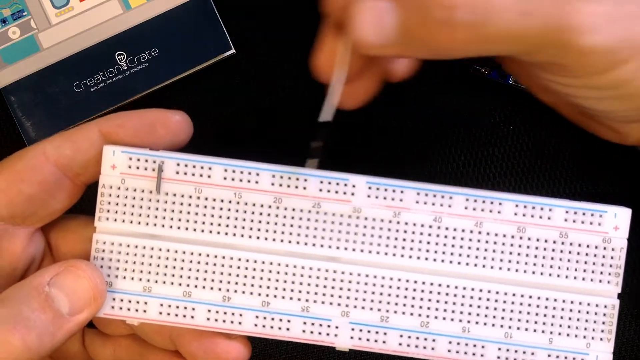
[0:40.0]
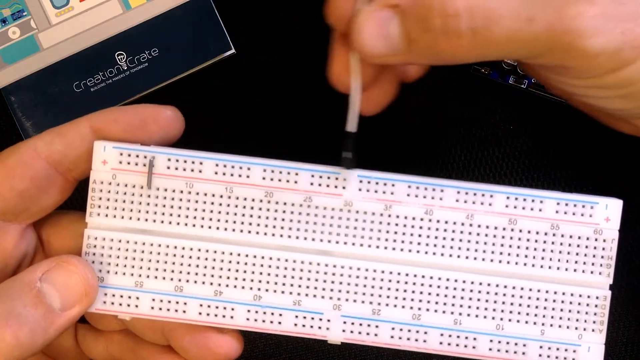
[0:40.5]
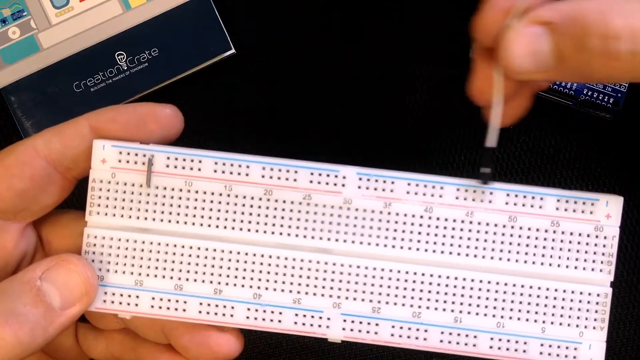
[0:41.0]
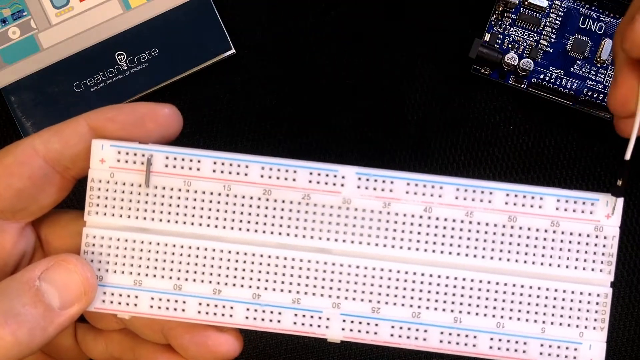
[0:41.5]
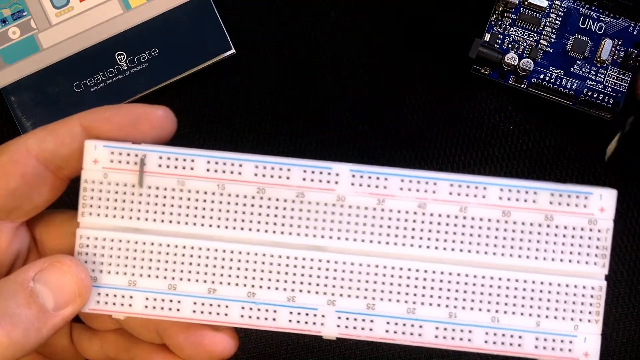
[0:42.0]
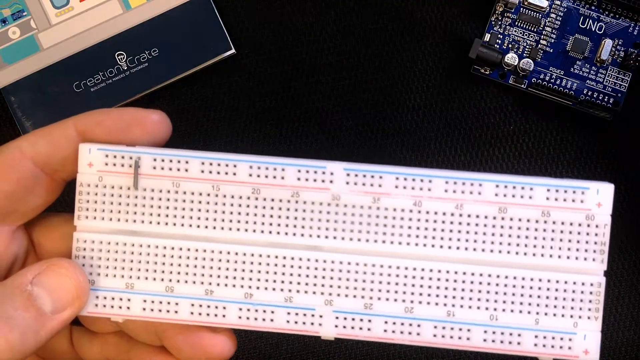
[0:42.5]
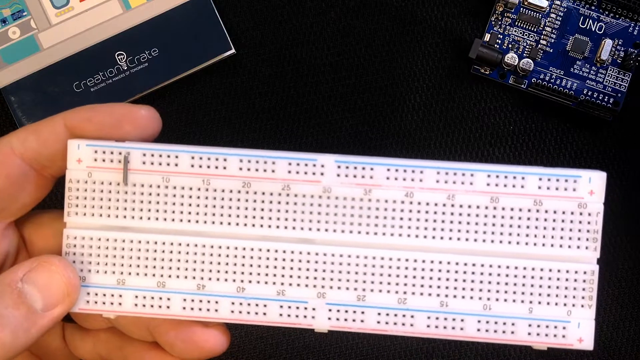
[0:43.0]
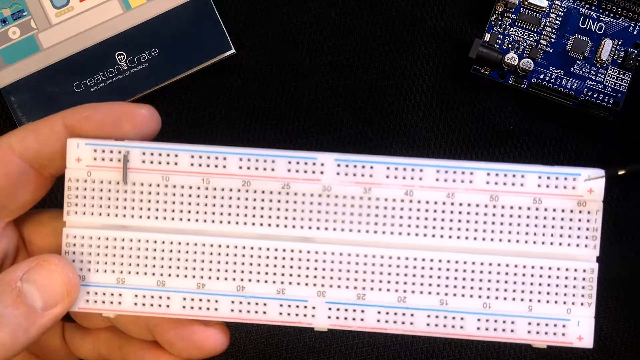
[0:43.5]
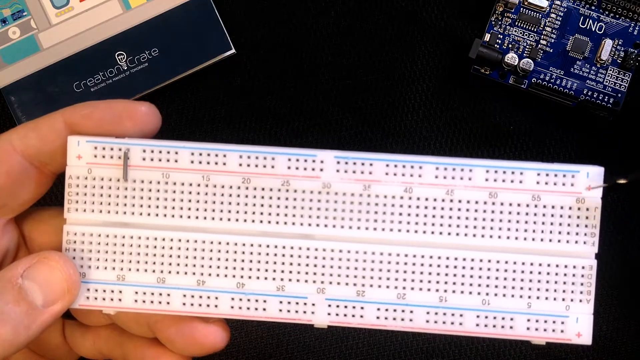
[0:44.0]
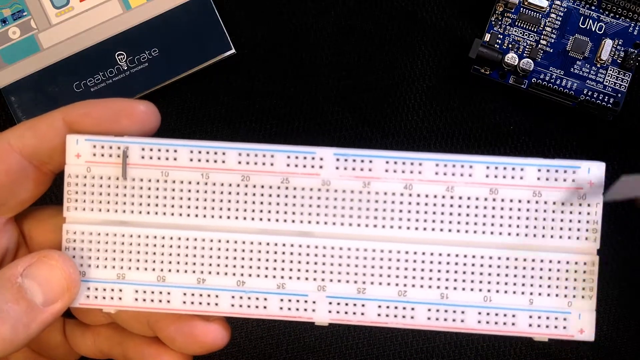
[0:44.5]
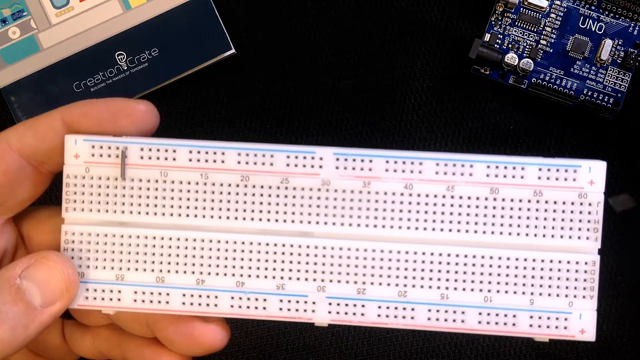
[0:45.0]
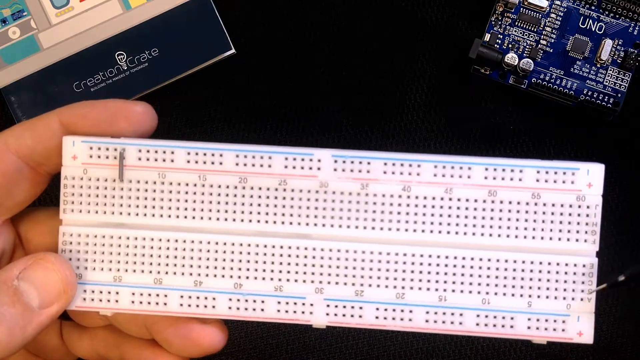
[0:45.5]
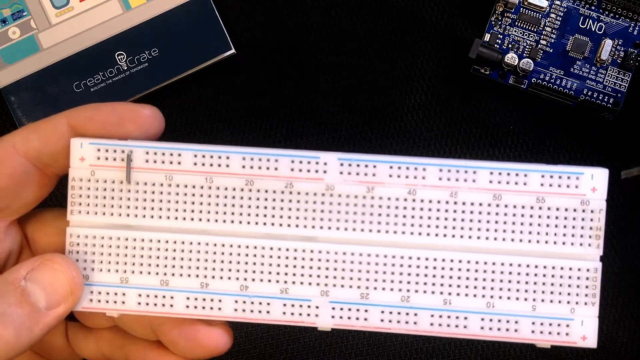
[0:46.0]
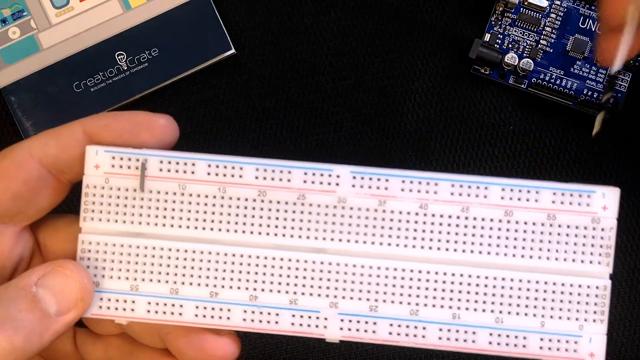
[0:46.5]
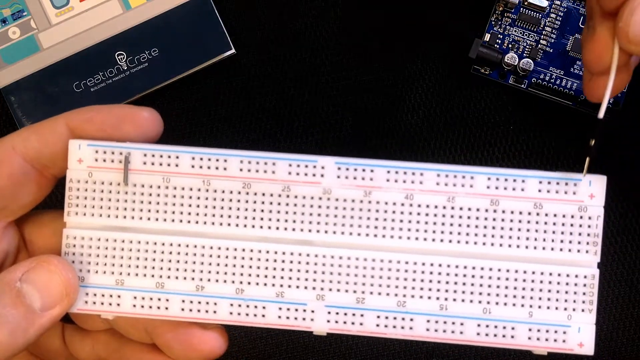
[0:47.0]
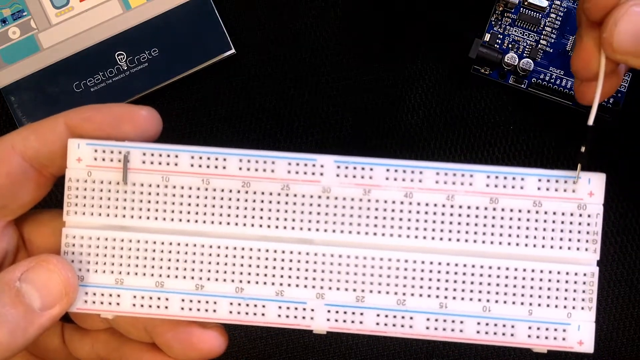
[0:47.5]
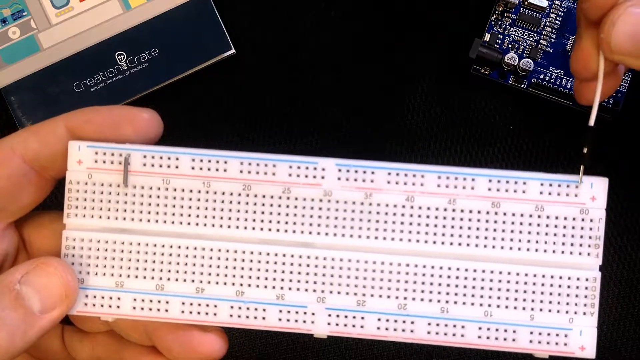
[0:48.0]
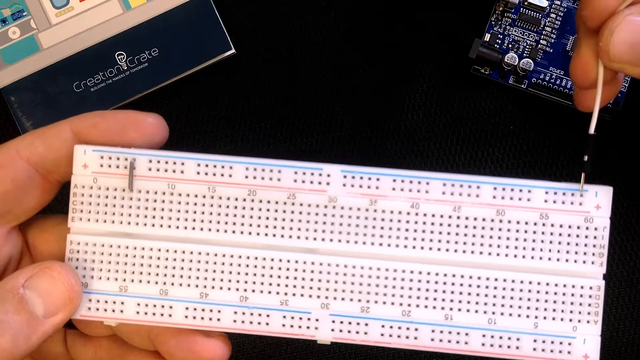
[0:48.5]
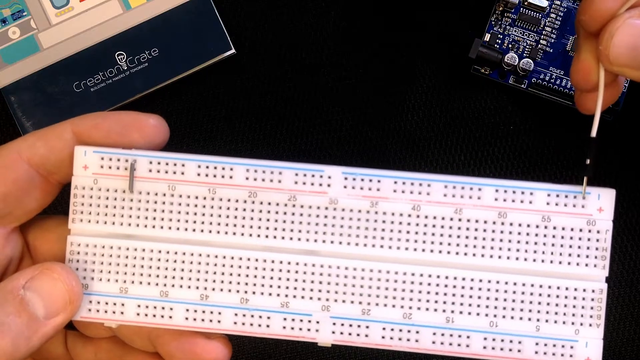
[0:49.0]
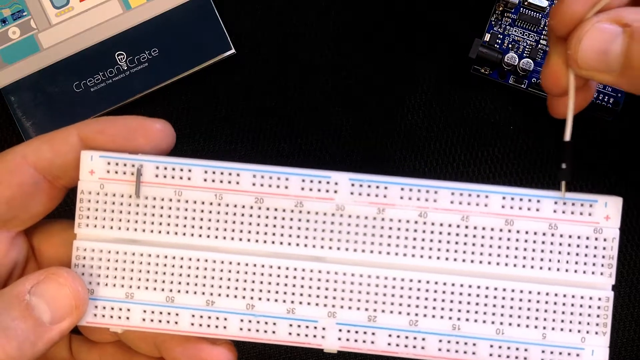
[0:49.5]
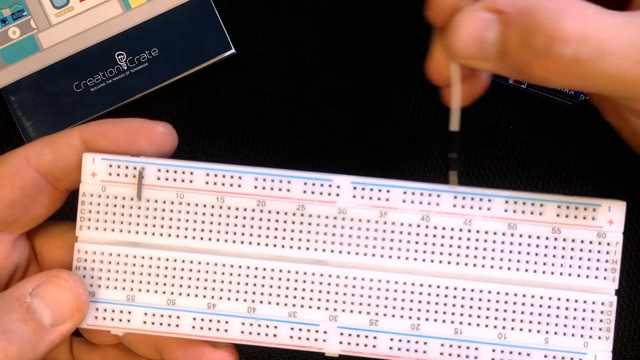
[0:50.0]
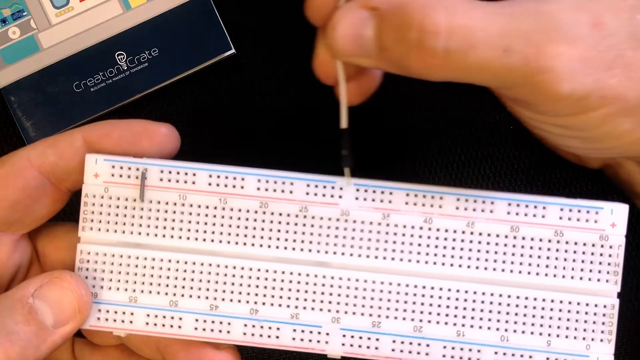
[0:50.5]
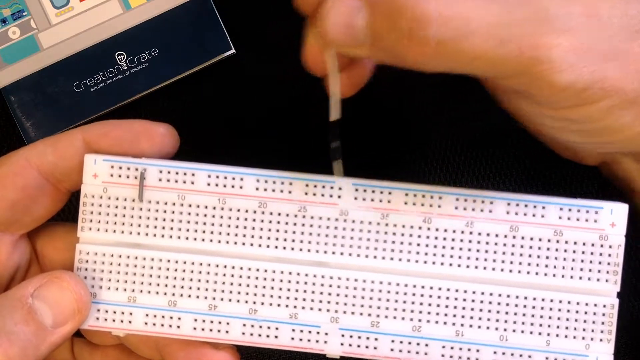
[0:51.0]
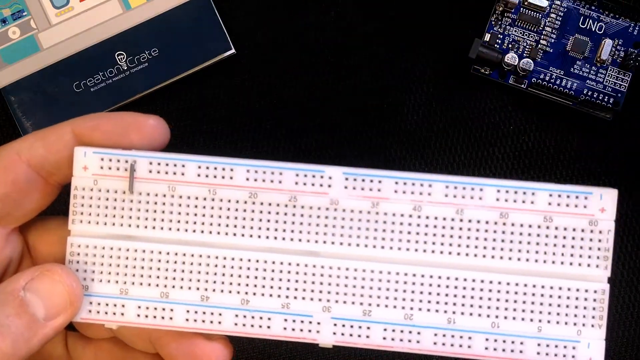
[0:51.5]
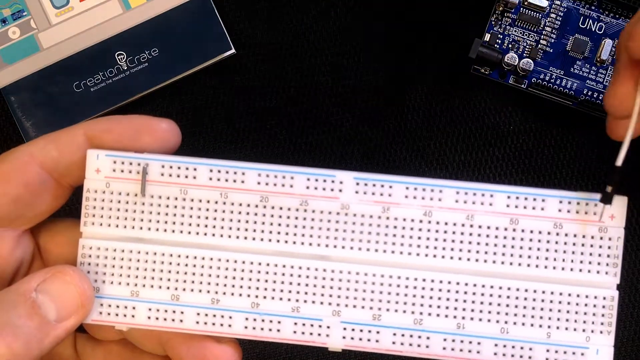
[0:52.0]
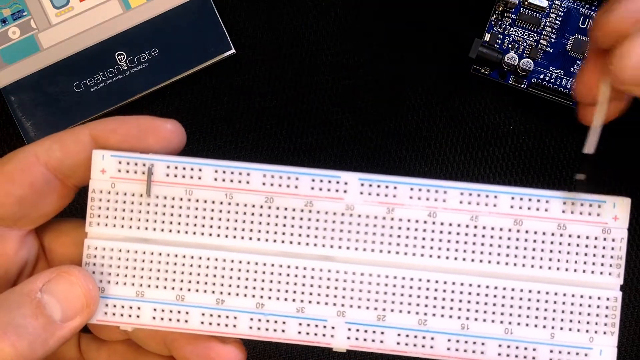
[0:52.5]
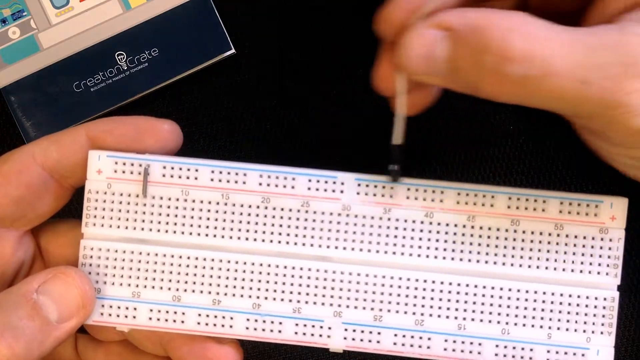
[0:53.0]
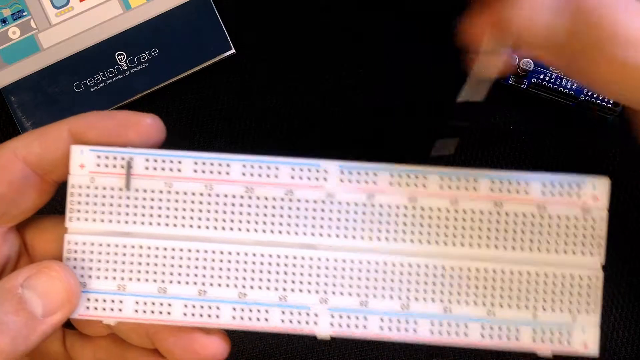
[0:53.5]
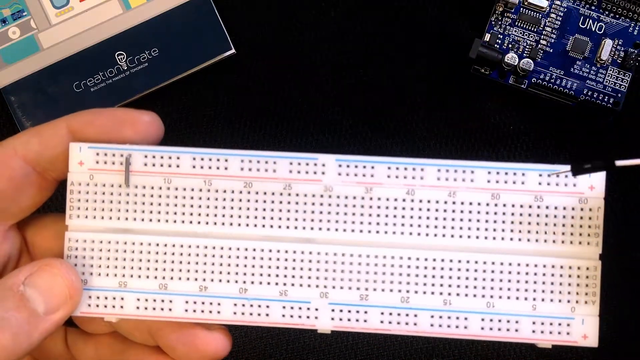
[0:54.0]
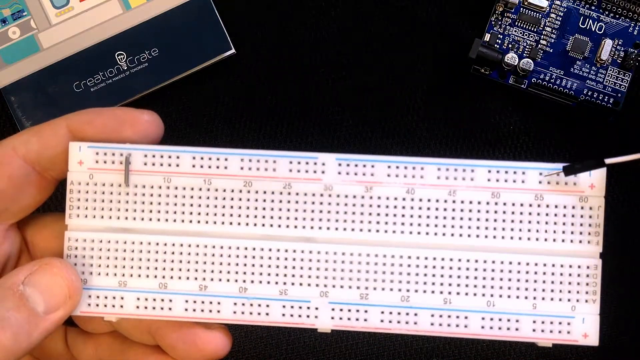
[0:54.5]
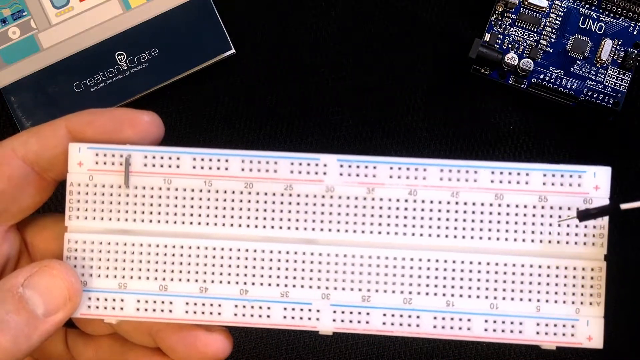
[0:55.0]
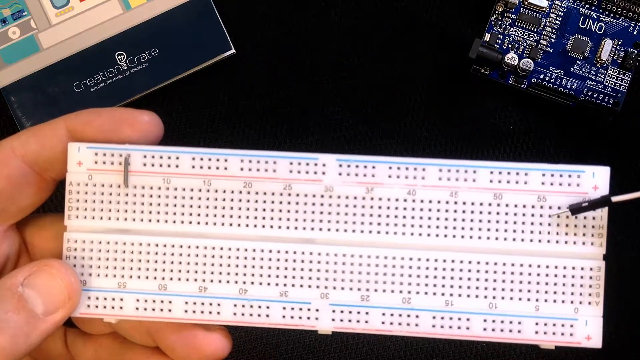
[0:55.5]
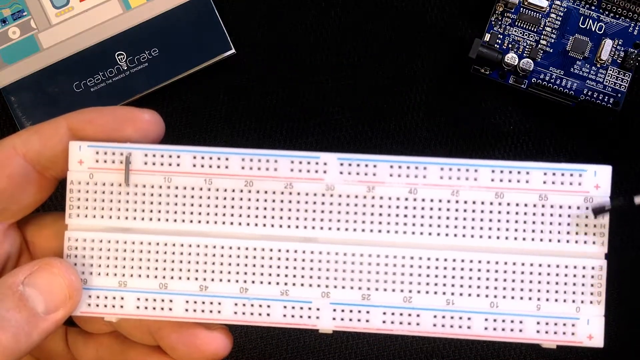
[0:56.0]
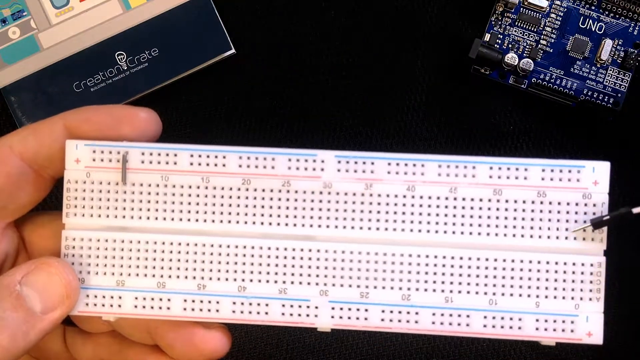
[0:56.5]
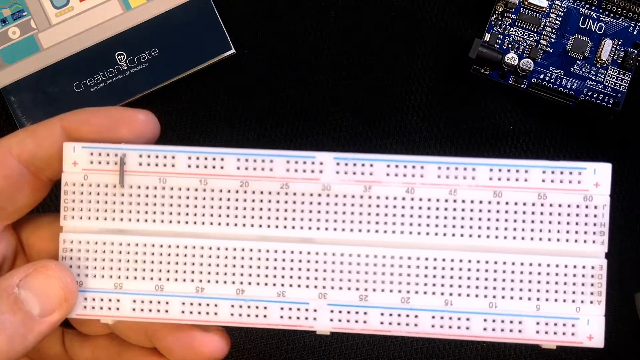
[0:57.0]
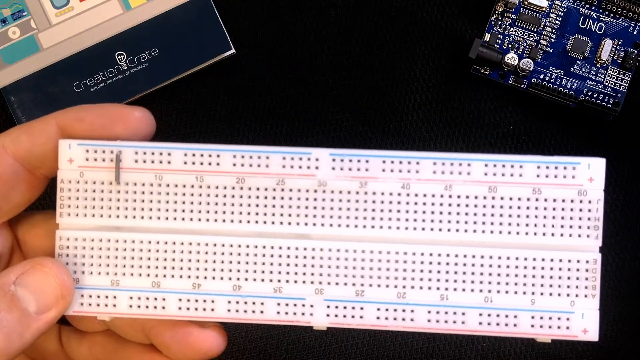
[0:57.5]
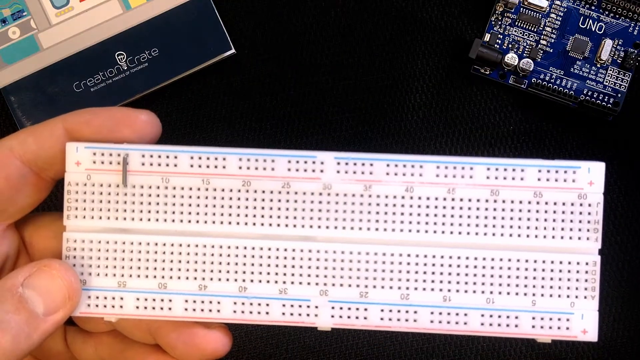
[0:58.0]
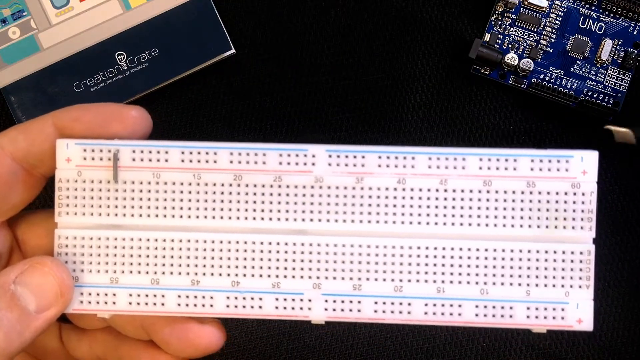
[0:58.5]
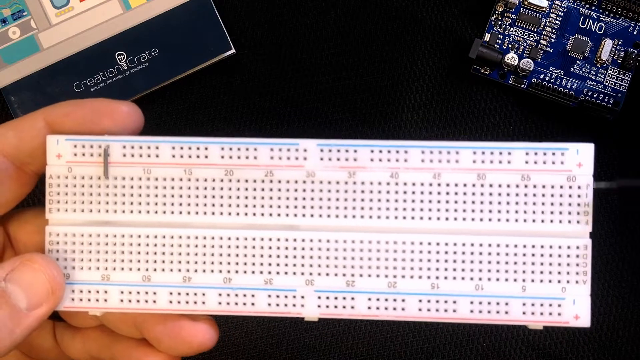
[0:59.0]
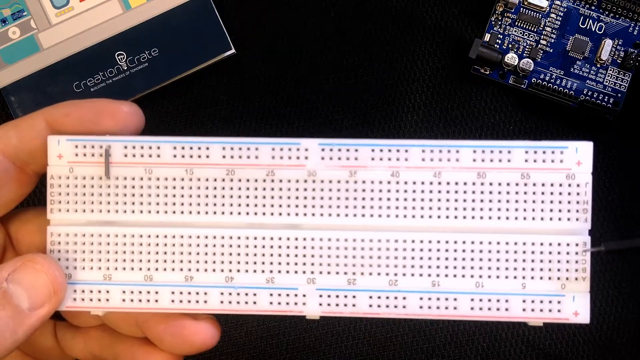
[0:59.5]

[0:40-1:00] Hands hold up the breadboard and point to its holes. Positive and negative signs are clearly visible on the breadboard, and at the top there is a thin blue line with a thin red line below it. The descriptor points below the connection, showing how the connection goes from the positive and negative signs into the lettered paths. The breadboard has holes, positive and negative signs, letters along its edges and numbers: 0, 5, 10, 15, 20, 25, 30, 35, 40, 45, 50, 55 and 60, and the letters A, B, C, D and E.